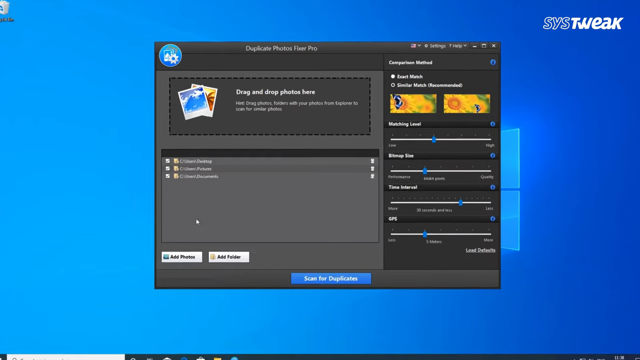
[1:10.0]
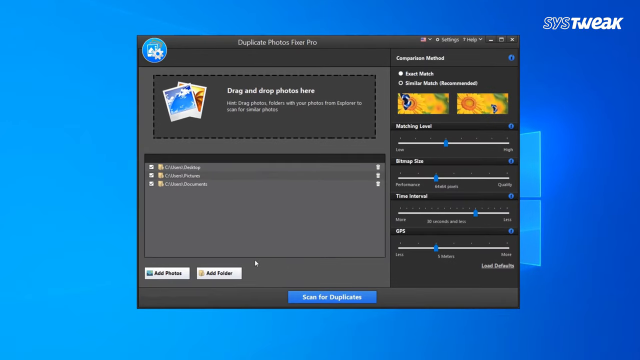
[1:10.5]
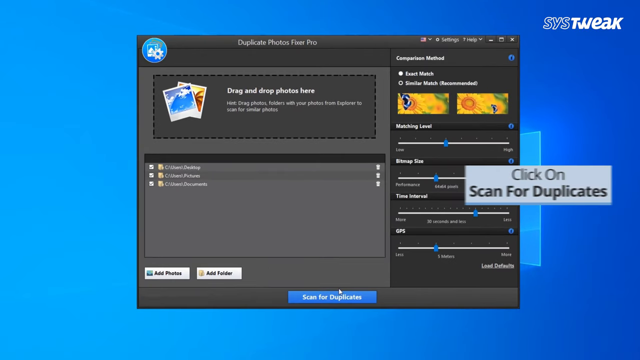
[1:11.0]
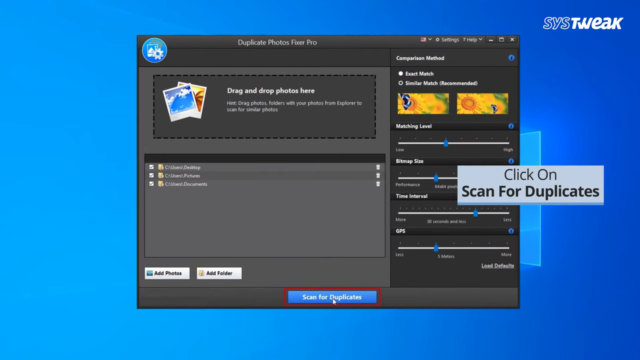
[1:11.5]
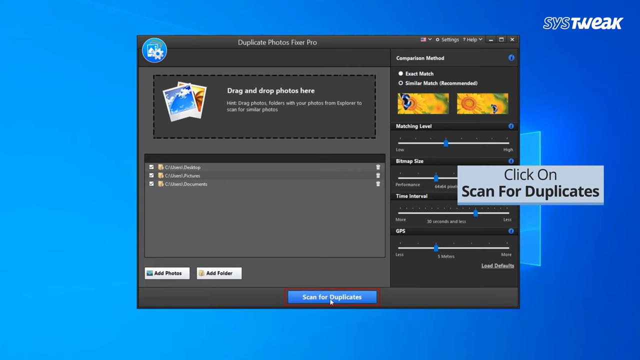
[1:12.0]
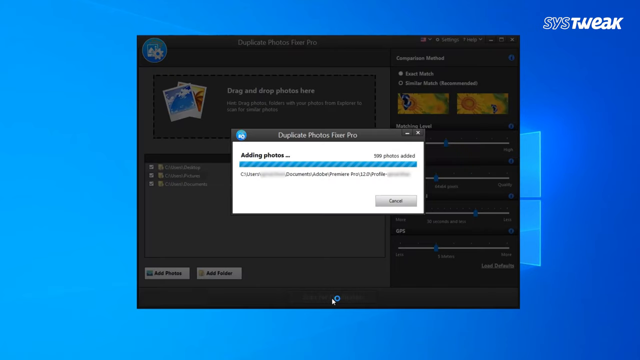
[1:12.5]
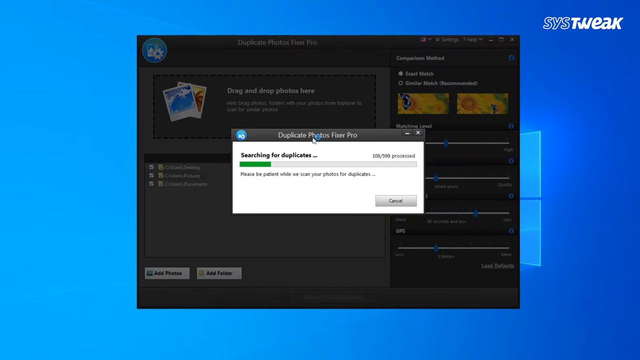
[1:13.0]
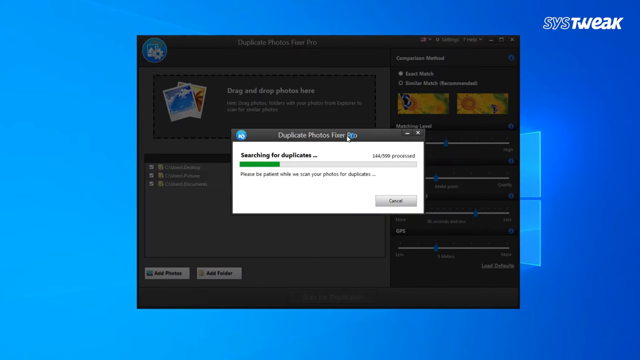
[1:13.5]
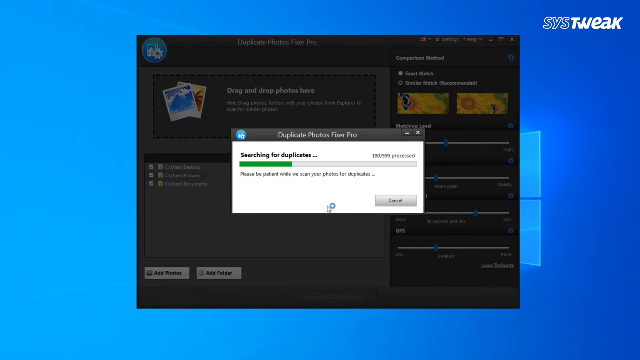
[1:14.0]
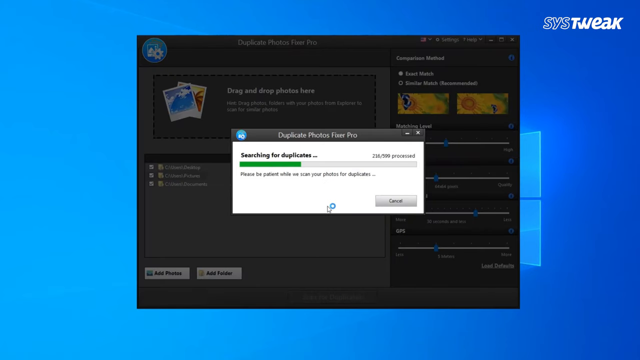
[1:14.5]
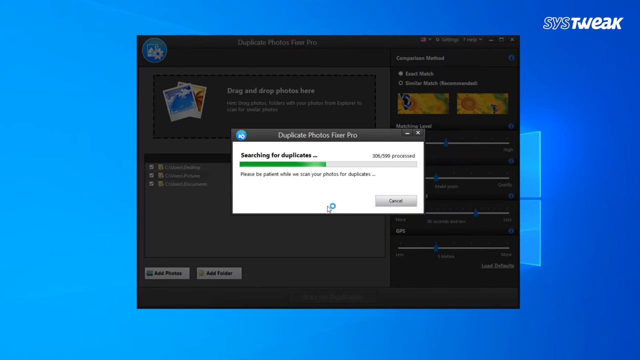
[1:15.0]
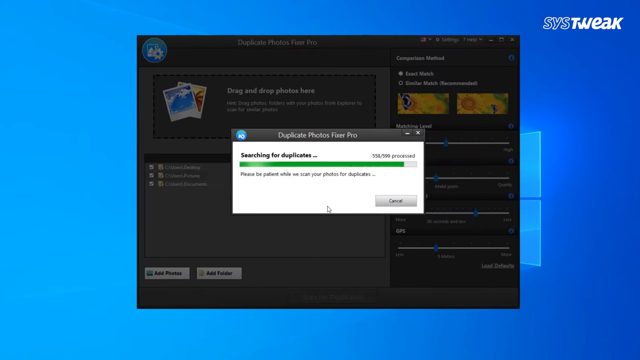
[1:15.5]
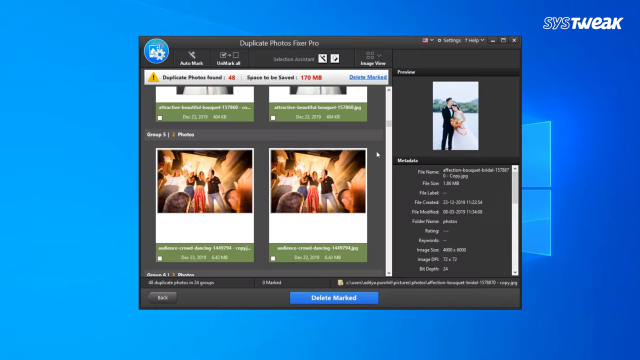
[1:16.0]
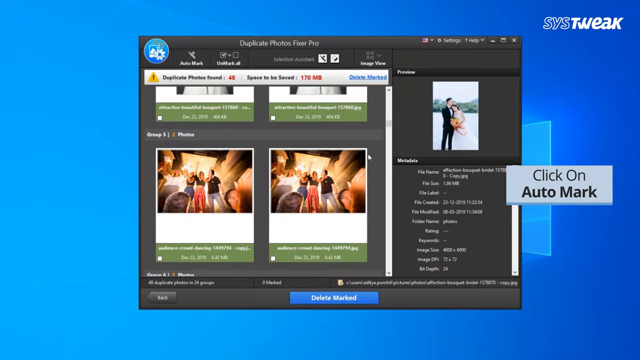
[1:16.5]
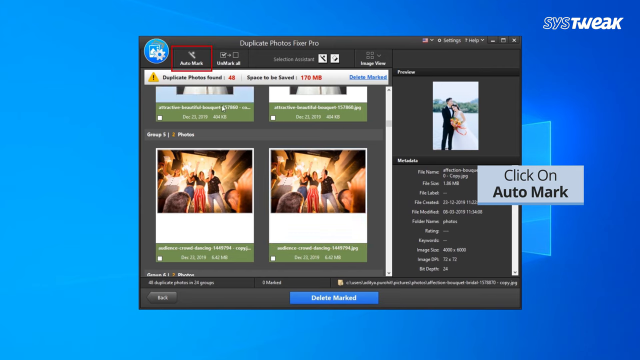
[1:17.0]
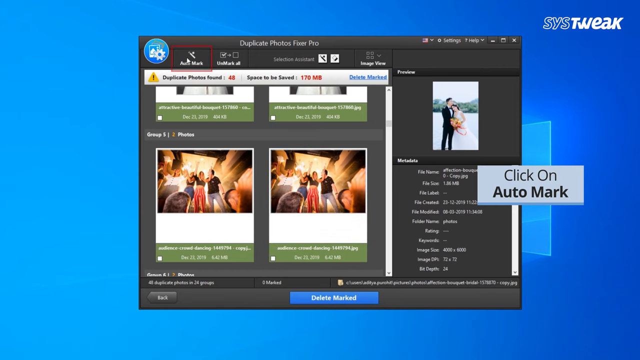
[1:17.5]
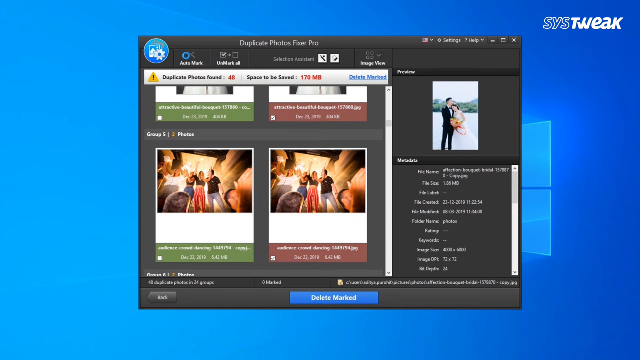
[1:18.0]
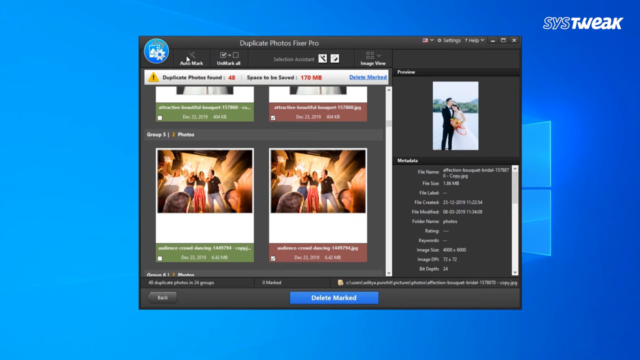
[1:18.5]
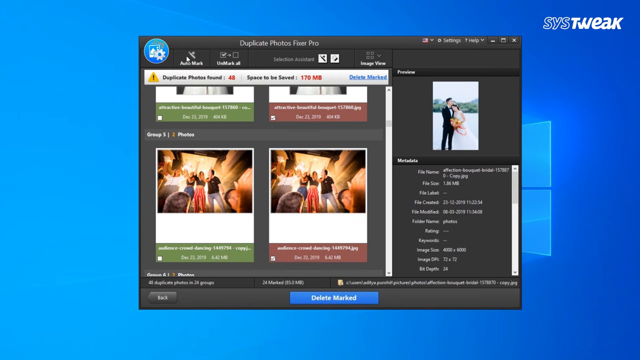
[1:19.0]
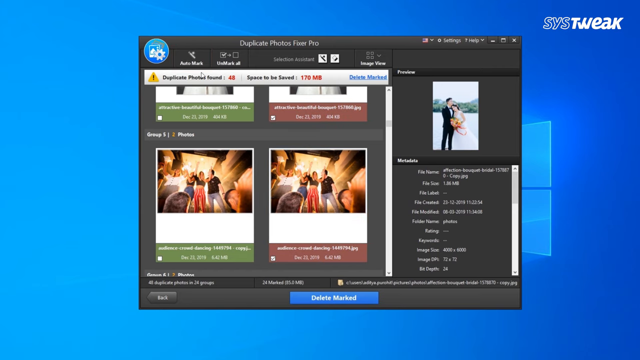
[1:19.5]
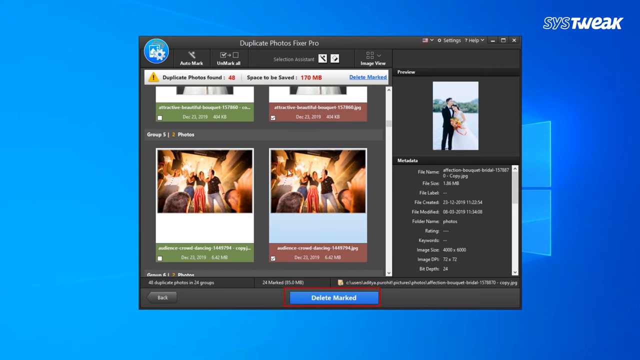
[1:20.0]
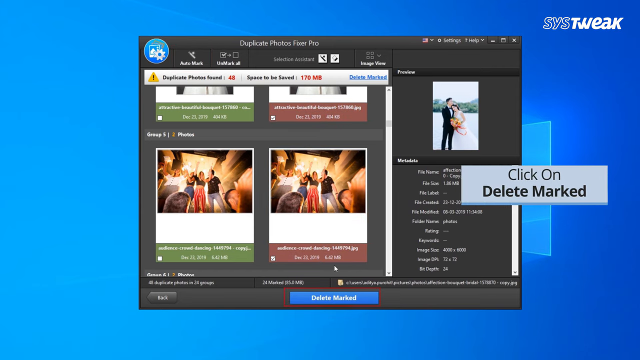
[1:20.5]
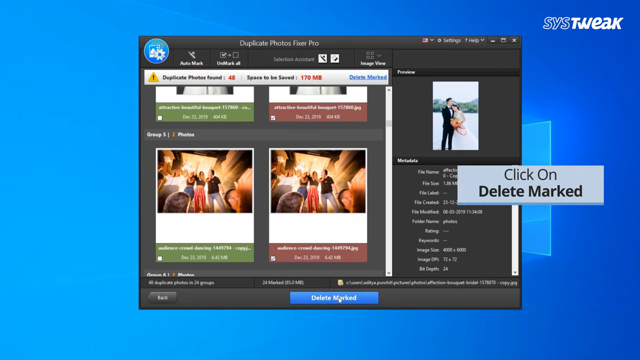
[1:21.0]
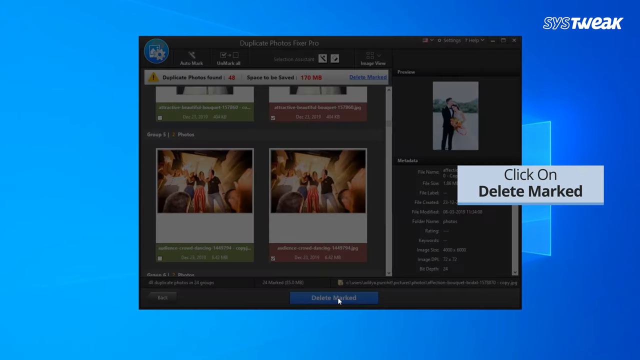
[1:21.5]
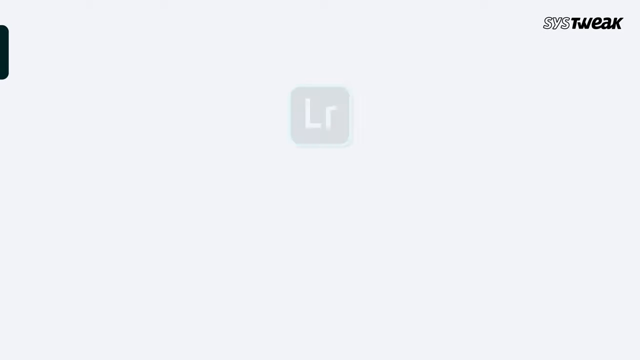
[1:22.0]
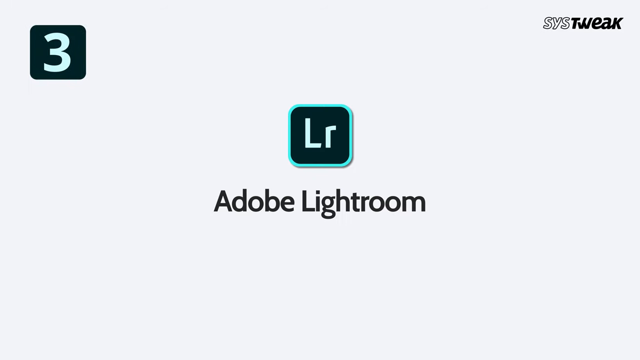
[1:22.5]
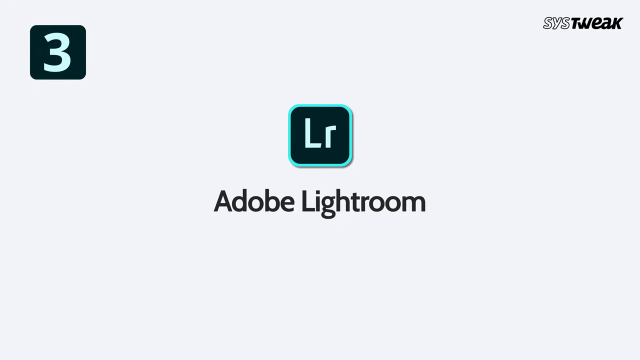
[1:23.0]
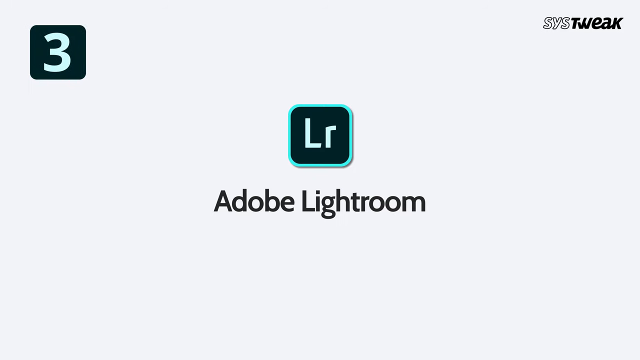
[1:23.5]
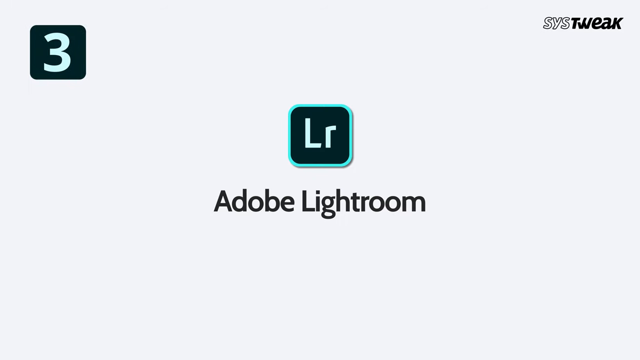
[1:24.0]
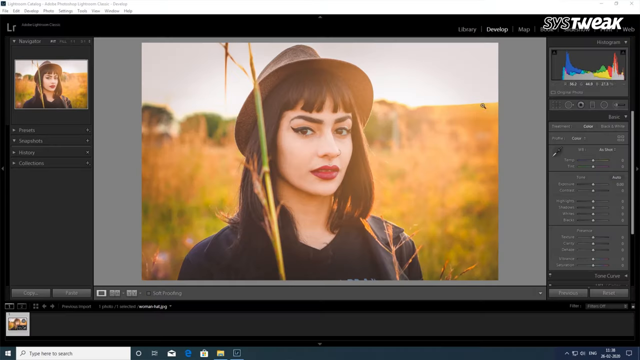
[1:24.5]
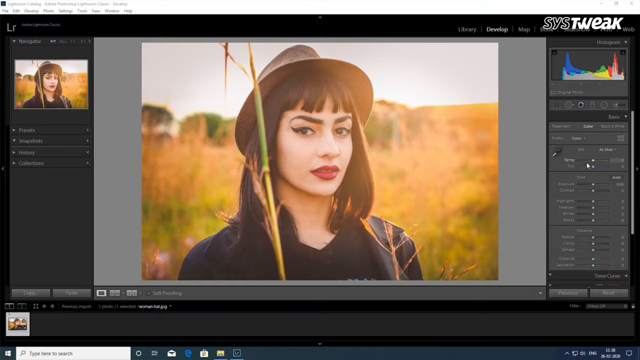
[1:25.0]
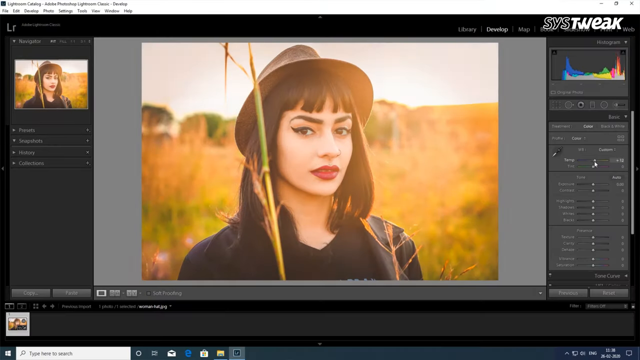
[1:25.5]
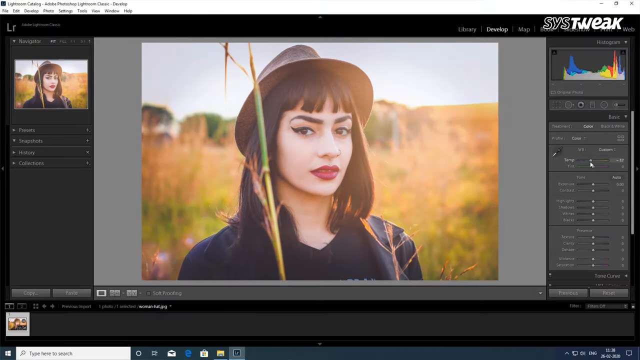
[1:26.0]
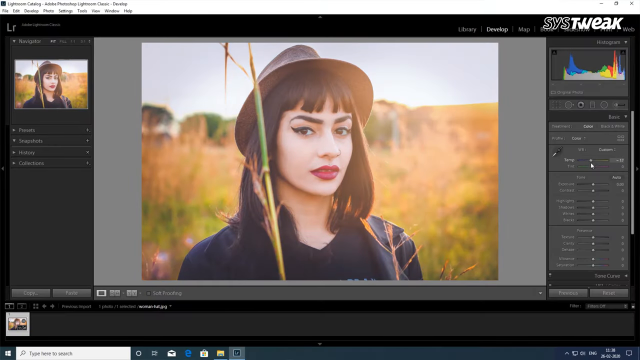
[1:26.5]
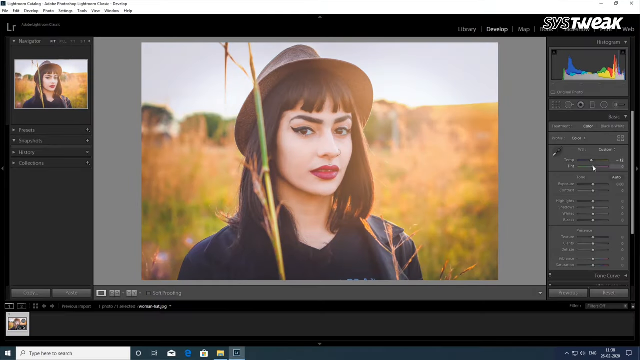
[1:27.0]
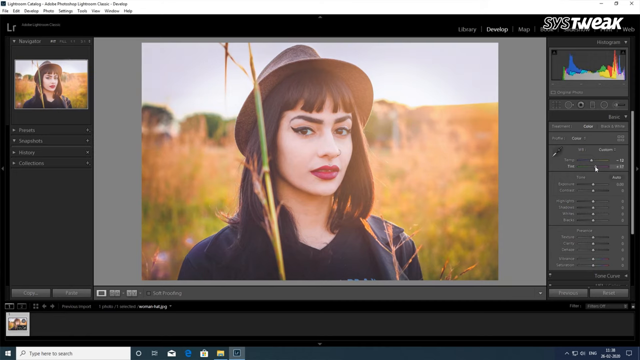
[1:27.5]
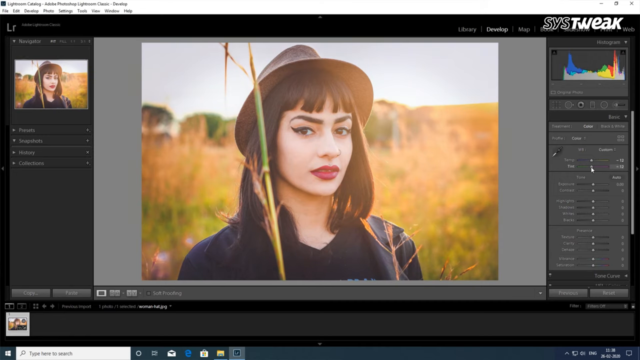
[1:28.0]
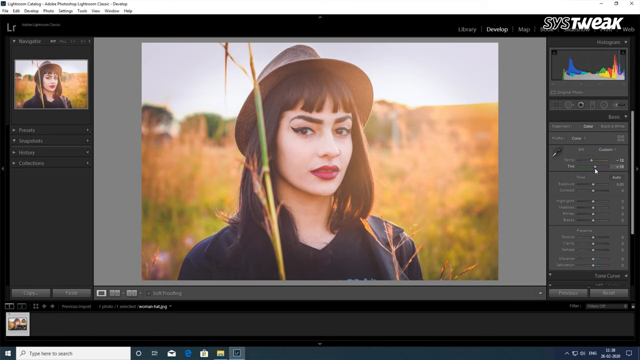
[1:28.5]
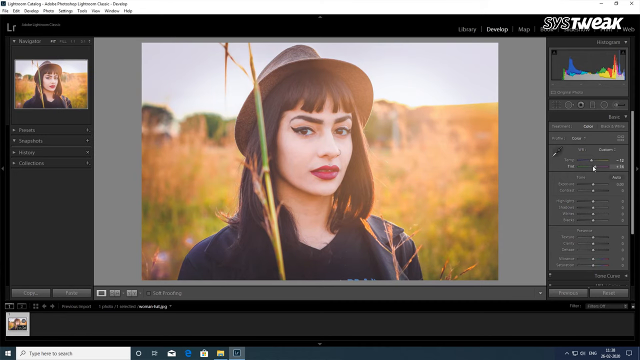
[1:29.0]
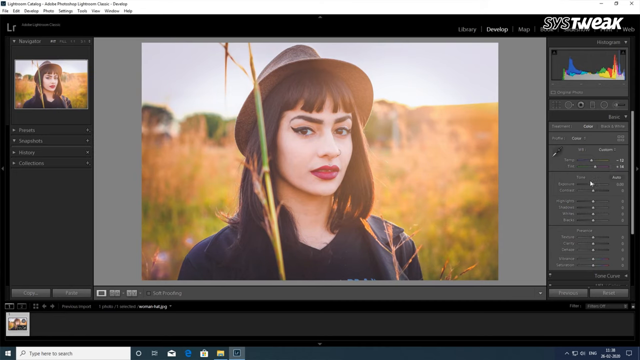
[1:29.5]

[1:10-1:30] A new logo appears with the words "Duplicate Photos Fixer" in the middle of the screen. A desktop view of the app follows, and someone uses a cursor to click a button at the bottom of the app that states "Scan for Duplicates," which is highlighted in red. Another window opens with a progress bar and a "Searching for Duplicates" message. The progress bar increases, and when it finishes the window goes away and the app is visible once more. The caption "Click on Auto Mark" pops up, and the person operating the computer clicks on "Auto Mark." Meanwhile, there is a photo on the right of a married couple at their wedding, with some details below it and some photo editing options to the left. There is a button that states "Click on delete marked." Finally, a photo editing app is shown full screen with one photo of a woman.